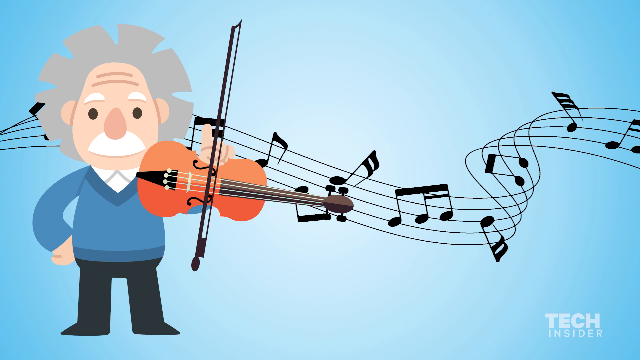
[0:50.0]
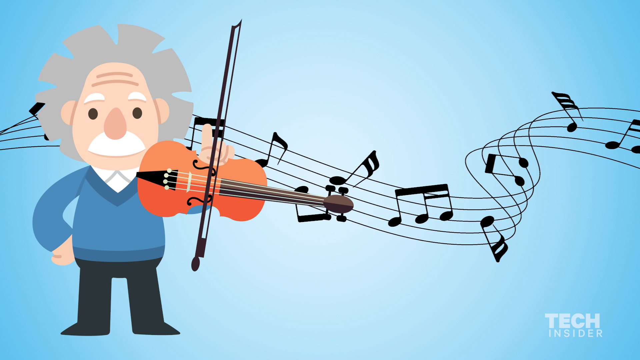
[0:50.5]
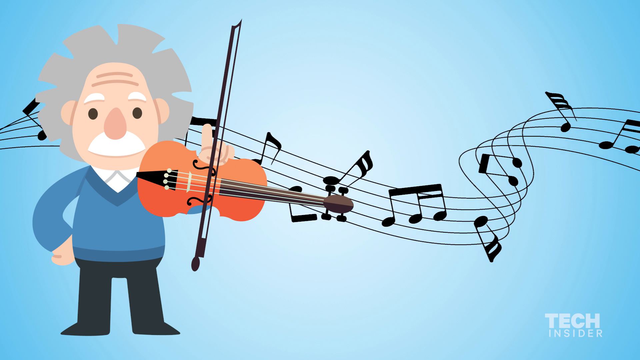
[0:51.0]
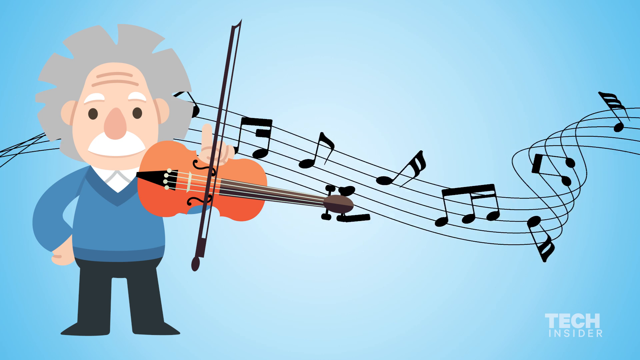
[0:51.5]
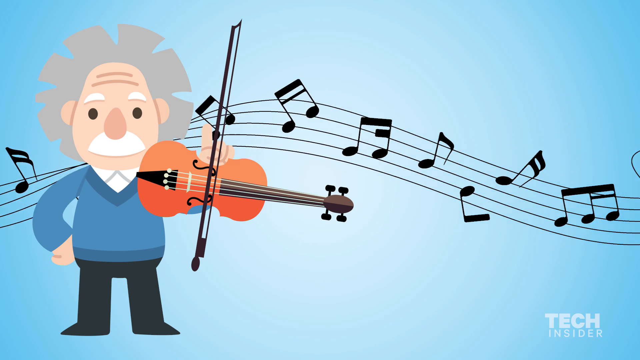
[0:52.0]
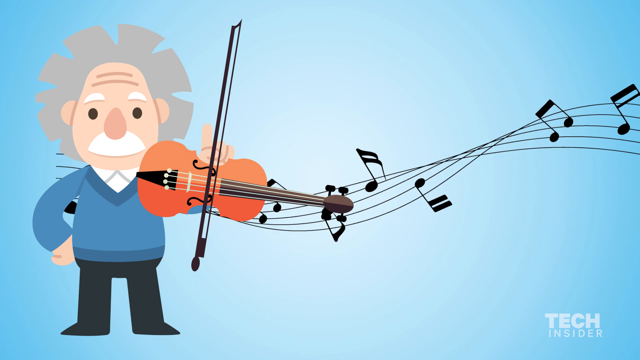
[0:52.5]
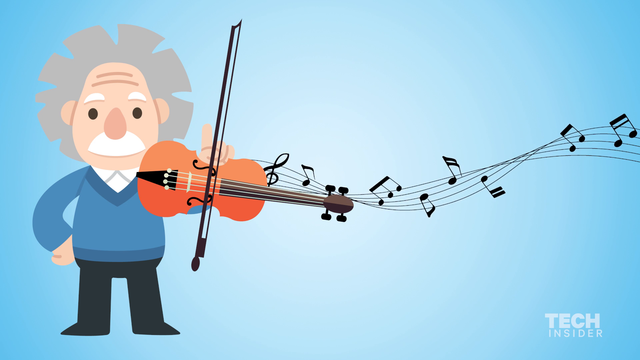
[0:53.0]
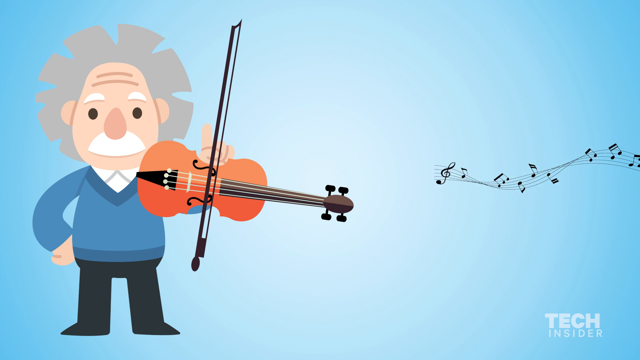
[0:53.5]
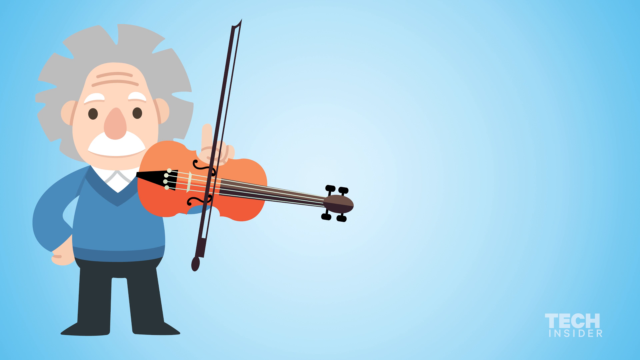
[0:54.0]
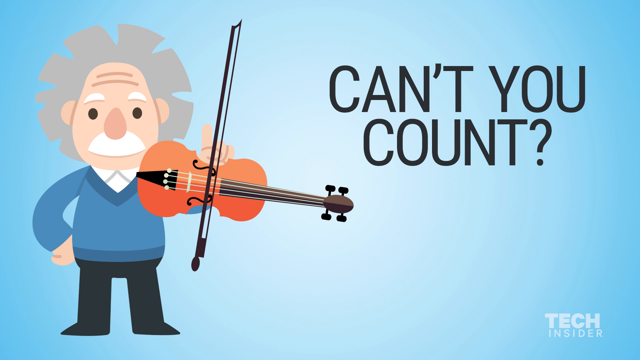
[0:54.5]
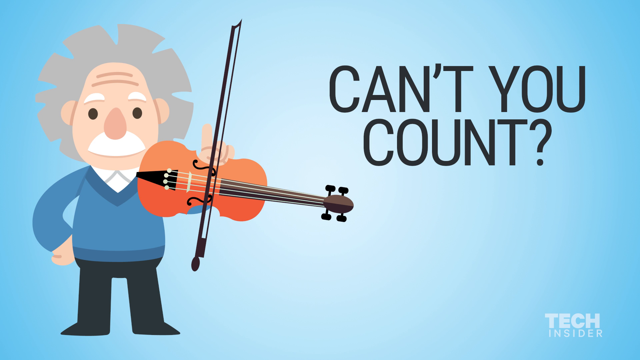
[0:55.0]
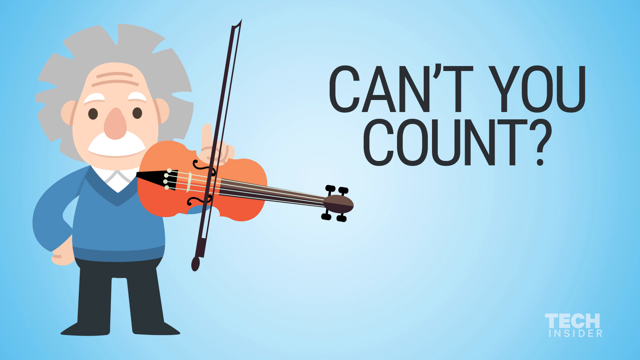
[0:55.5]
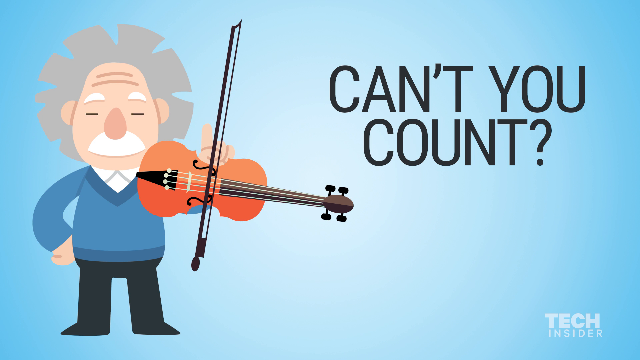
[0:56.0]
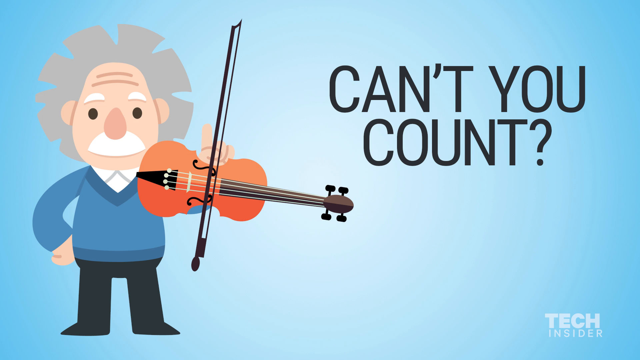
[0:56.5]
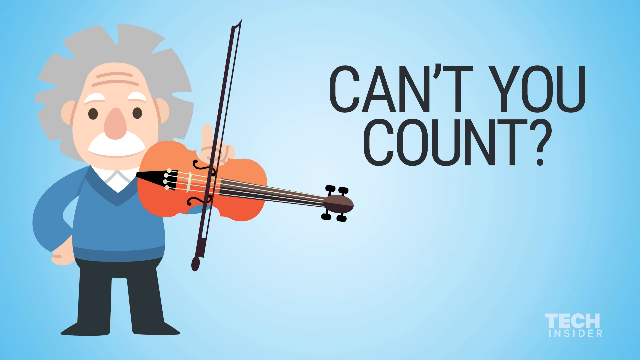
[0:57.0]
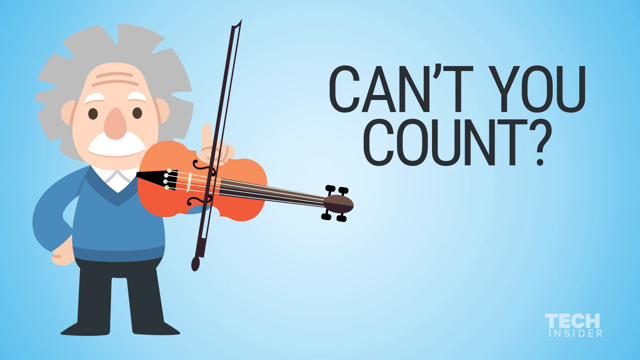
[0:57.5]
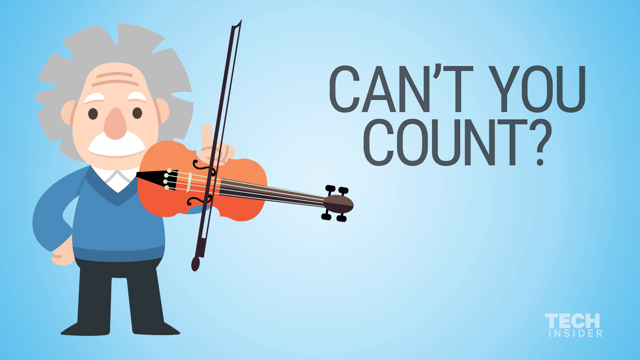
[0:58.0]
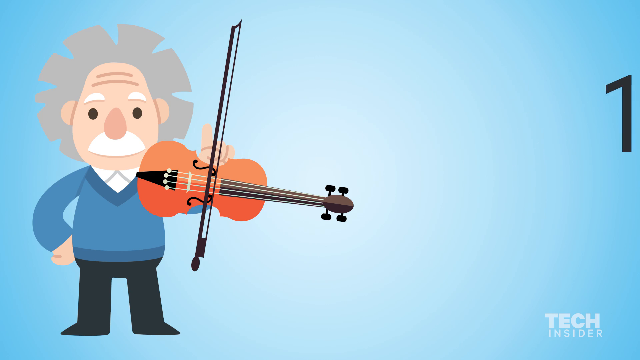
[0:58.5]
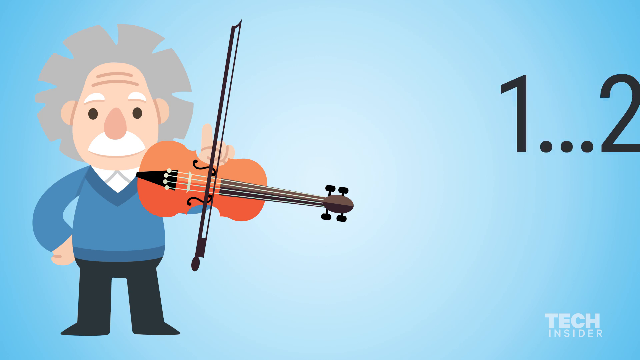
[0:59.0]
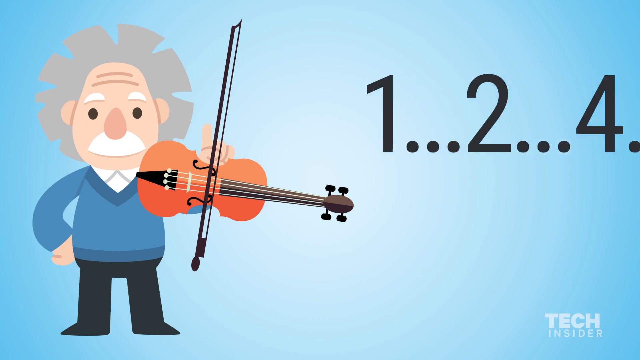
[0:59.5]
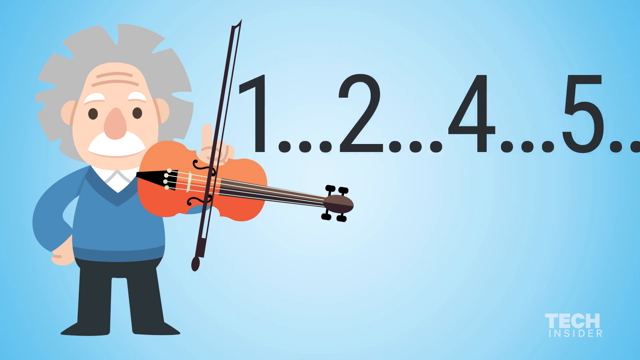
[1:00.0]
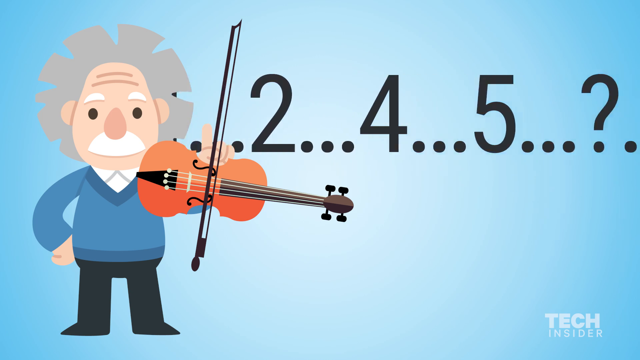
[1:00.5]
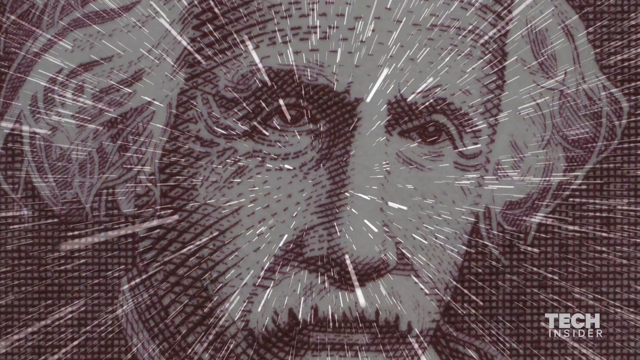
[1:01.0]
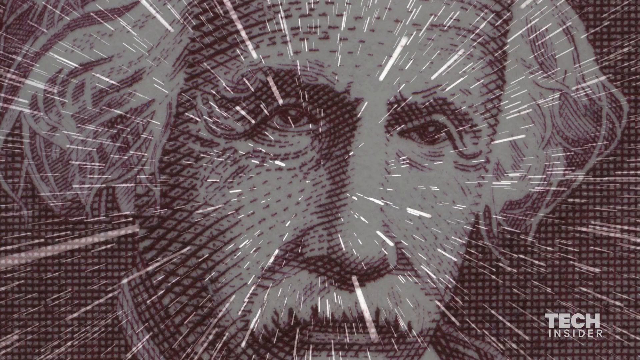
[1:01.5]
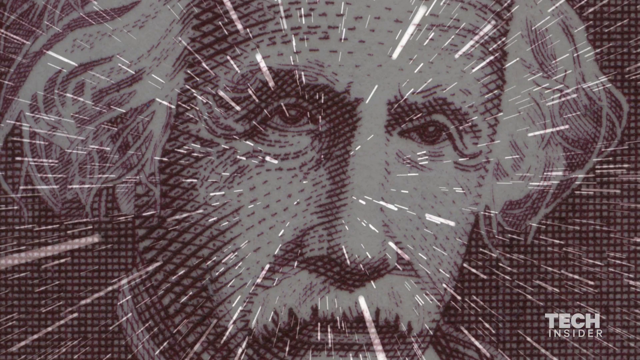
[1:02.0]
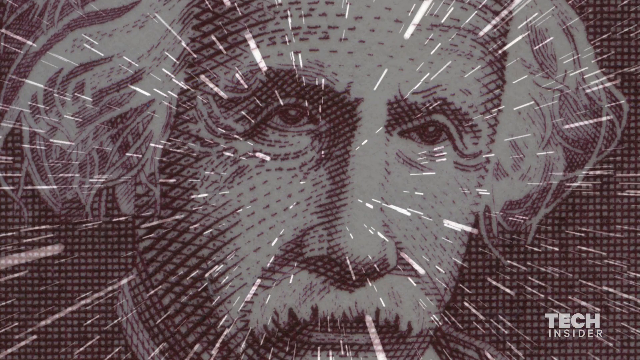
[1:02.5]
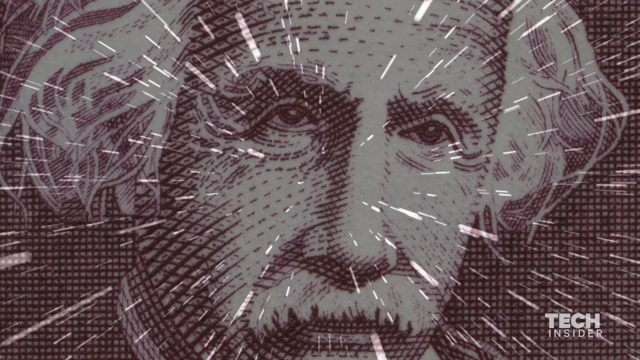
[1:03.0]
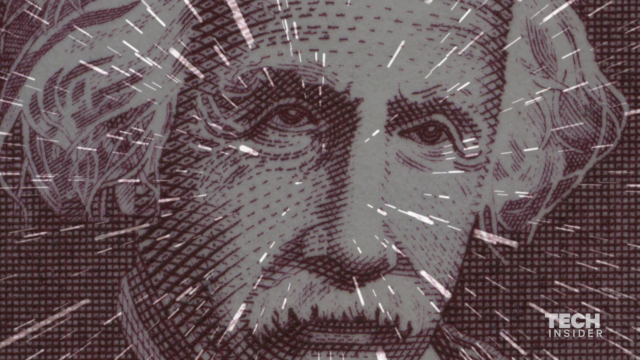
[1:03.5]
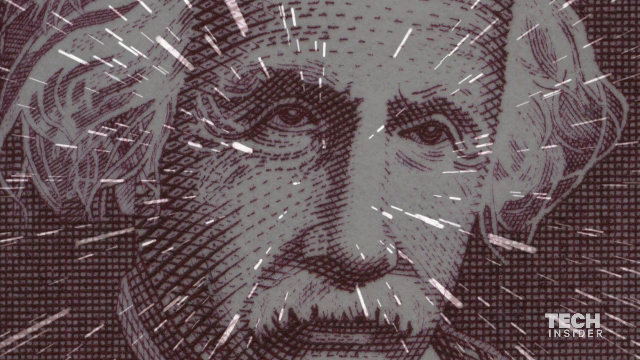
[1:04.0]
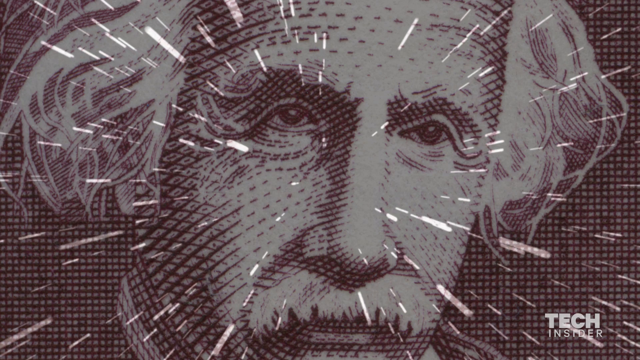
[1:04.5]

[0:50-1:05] The cartoon Einstein with the music notes shifts back and forth from left to right, then shrinks away. Black words read "can't you count?" followed by the numbers "1, 2 ... 4, 5," with ellipses between each number. The video then shifts to another illustrated picture of Einstein, somewhat ink-like, with lines coming from his face, almost like stars. His expression in this portrait is rather serious, and he looks toward the camera. The Tech Insider logo is in the bottom right corner.